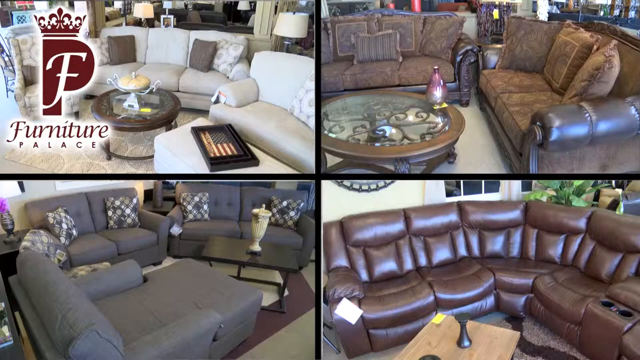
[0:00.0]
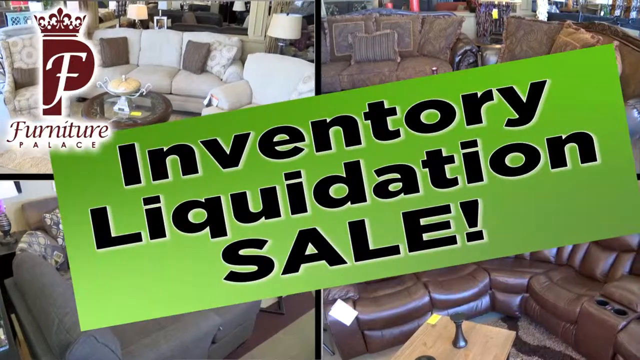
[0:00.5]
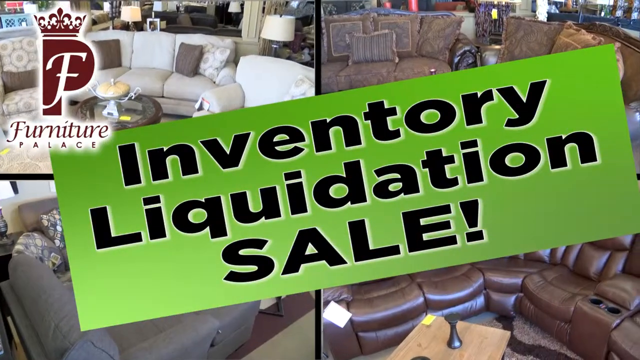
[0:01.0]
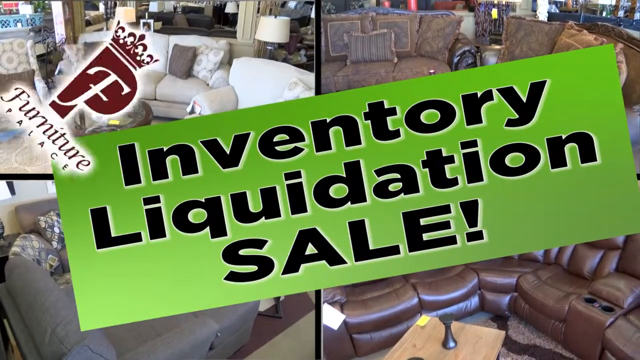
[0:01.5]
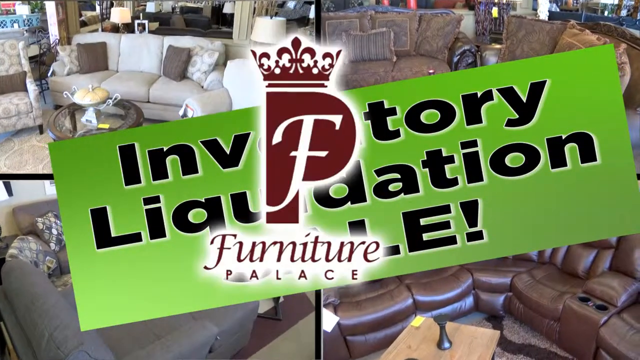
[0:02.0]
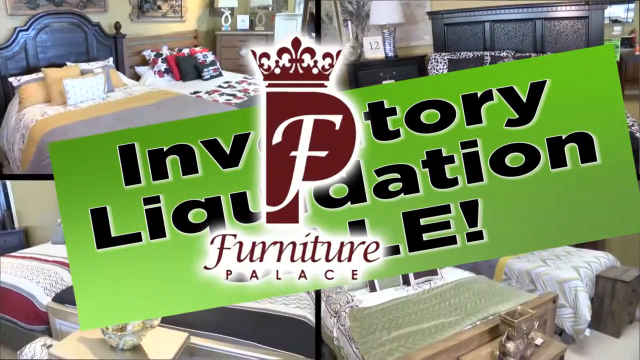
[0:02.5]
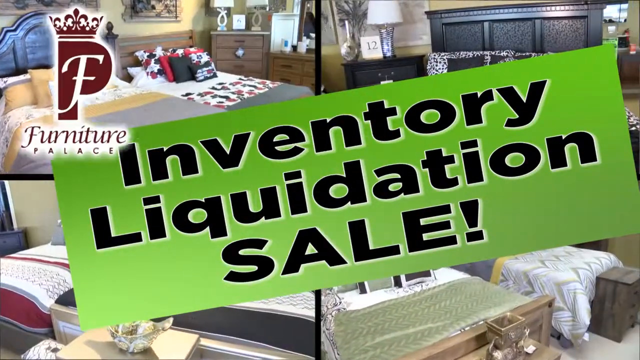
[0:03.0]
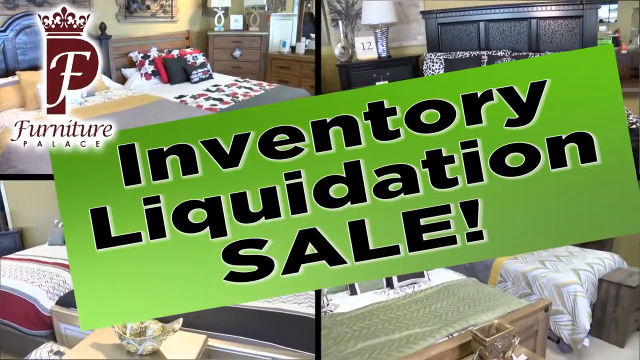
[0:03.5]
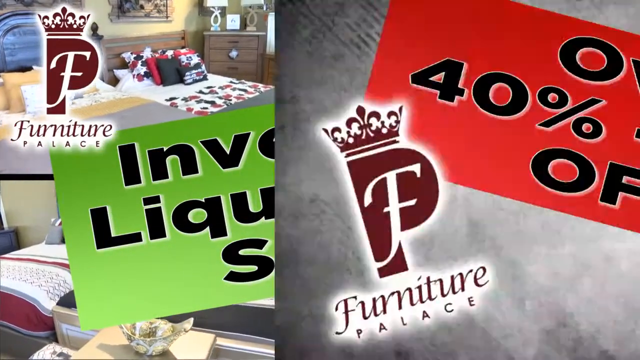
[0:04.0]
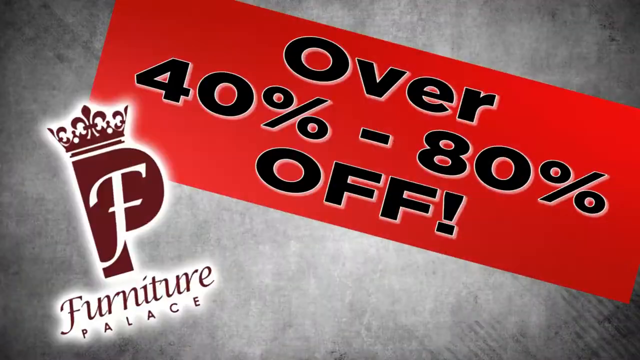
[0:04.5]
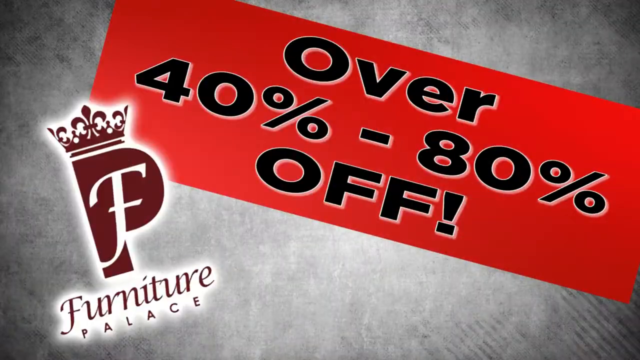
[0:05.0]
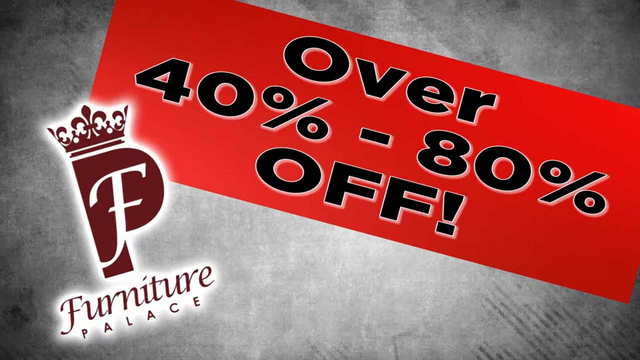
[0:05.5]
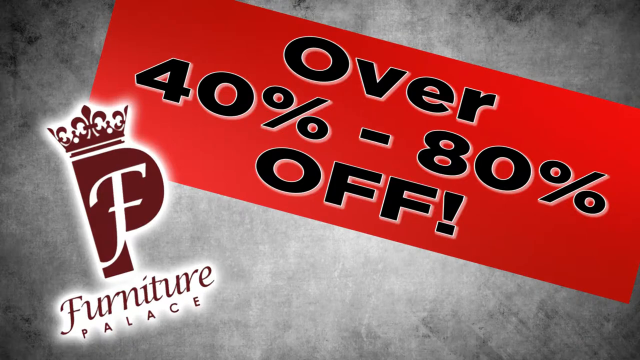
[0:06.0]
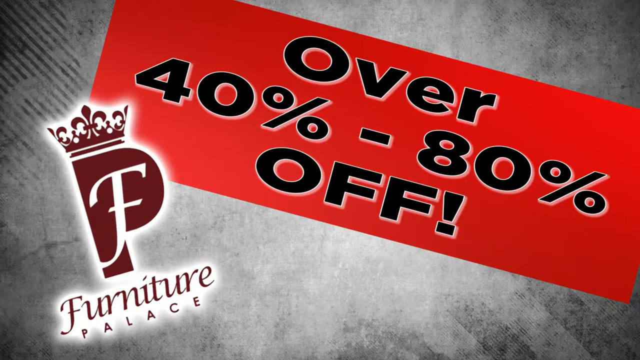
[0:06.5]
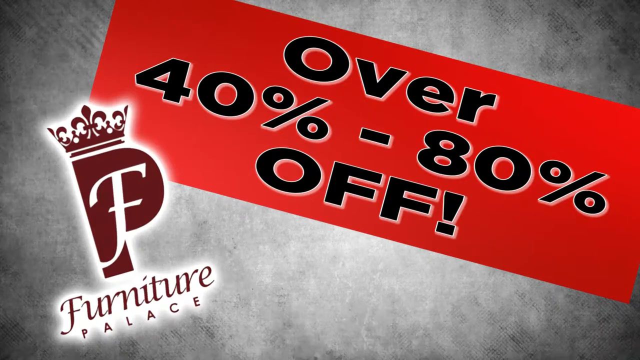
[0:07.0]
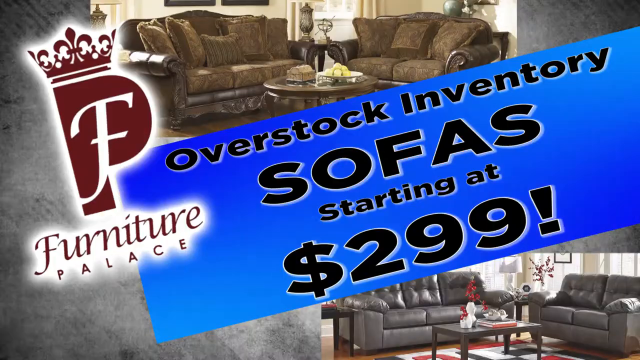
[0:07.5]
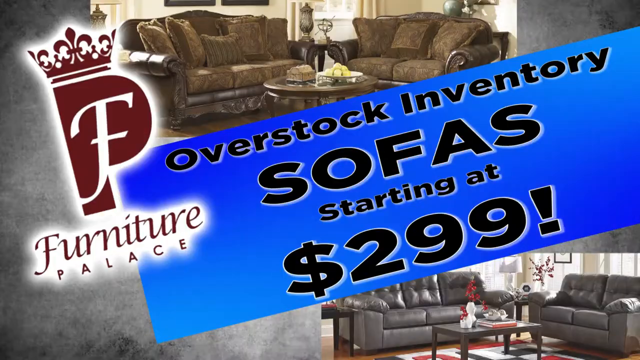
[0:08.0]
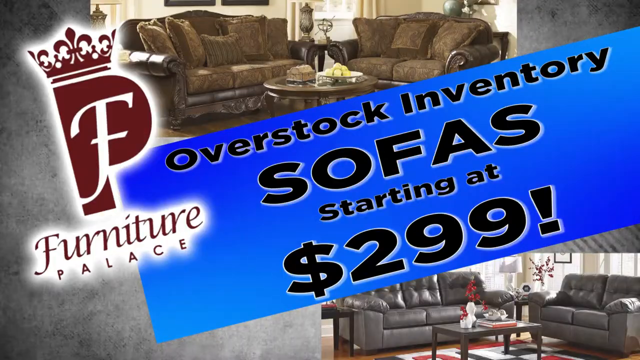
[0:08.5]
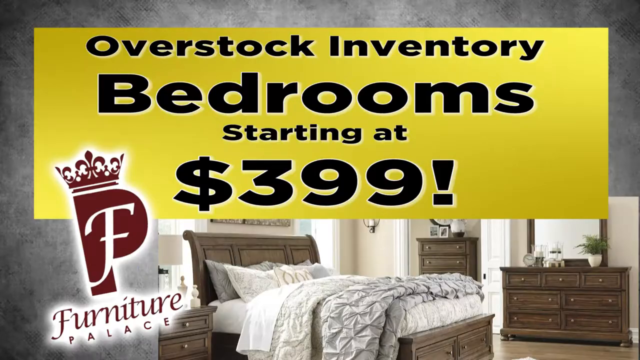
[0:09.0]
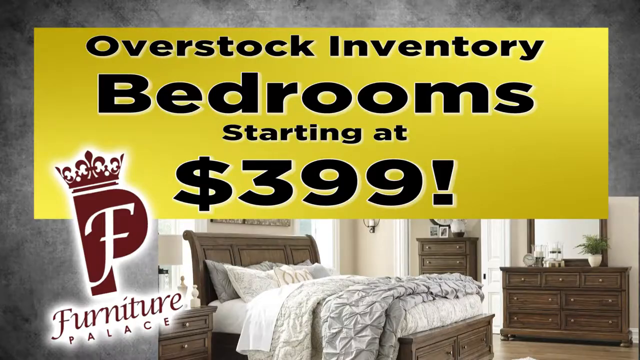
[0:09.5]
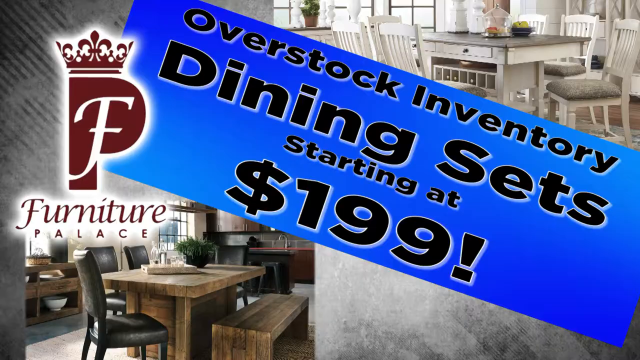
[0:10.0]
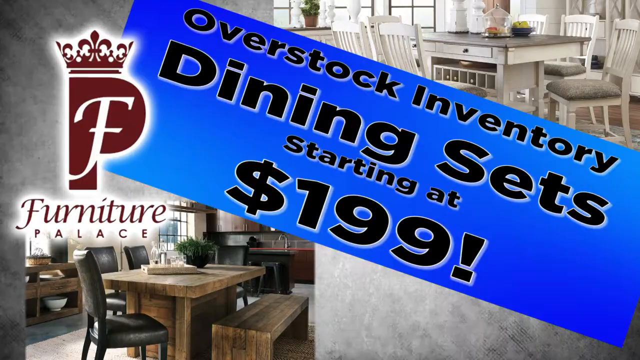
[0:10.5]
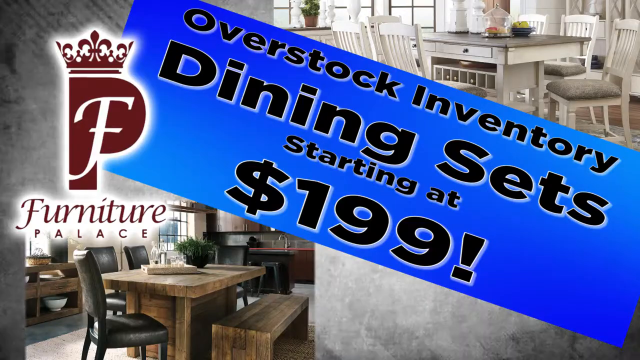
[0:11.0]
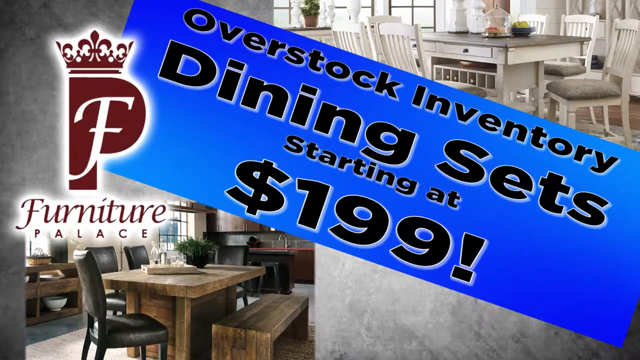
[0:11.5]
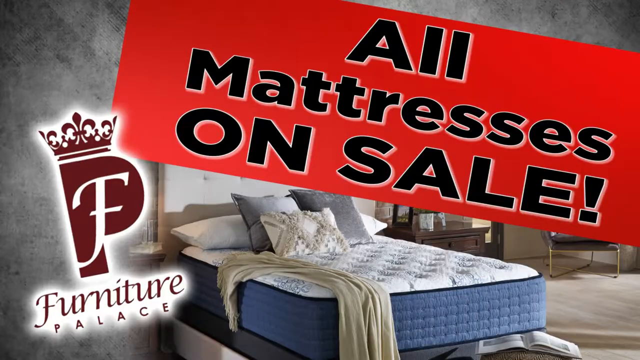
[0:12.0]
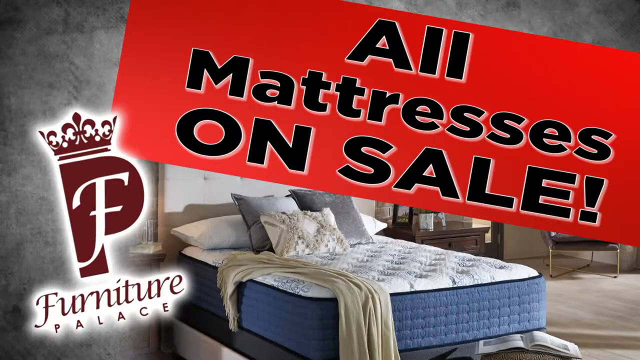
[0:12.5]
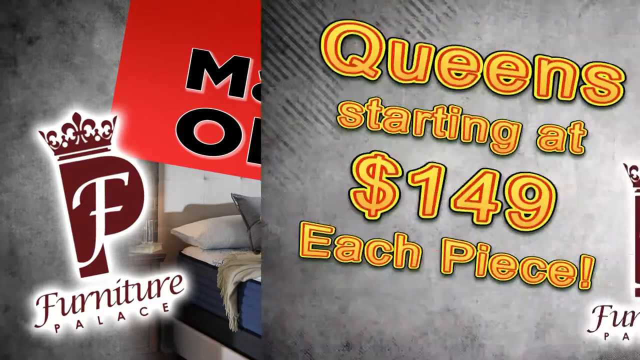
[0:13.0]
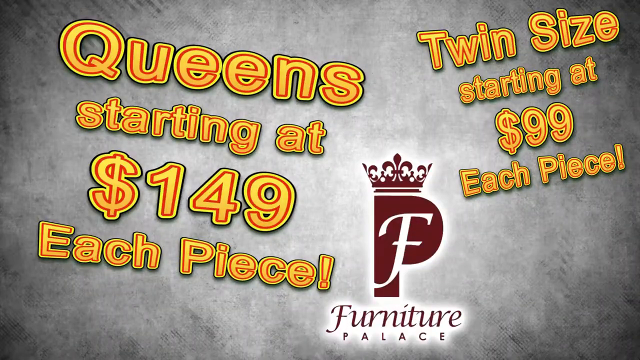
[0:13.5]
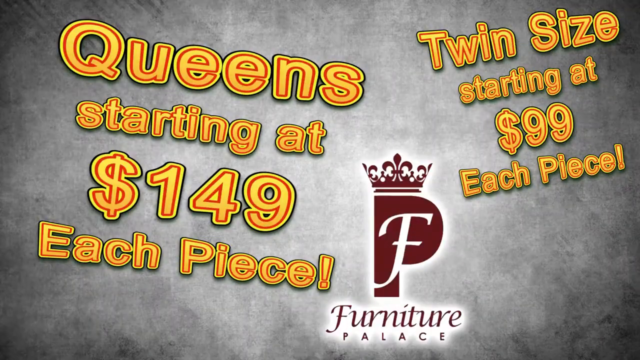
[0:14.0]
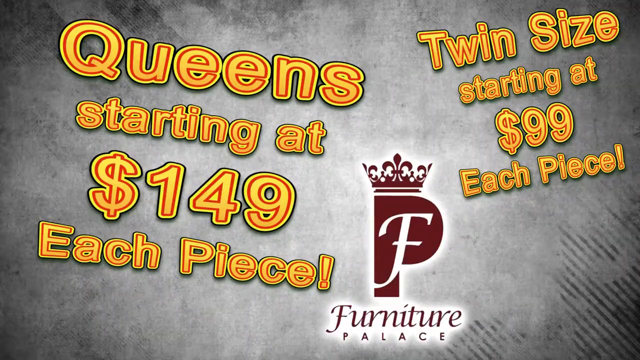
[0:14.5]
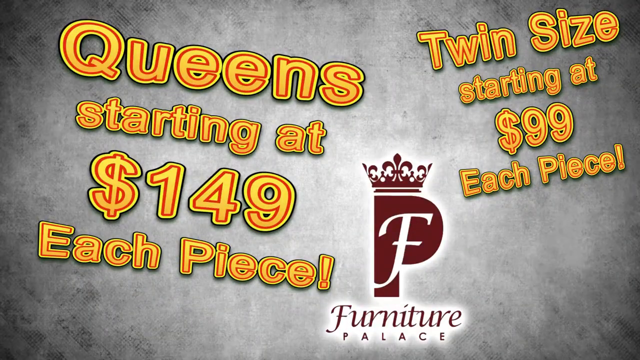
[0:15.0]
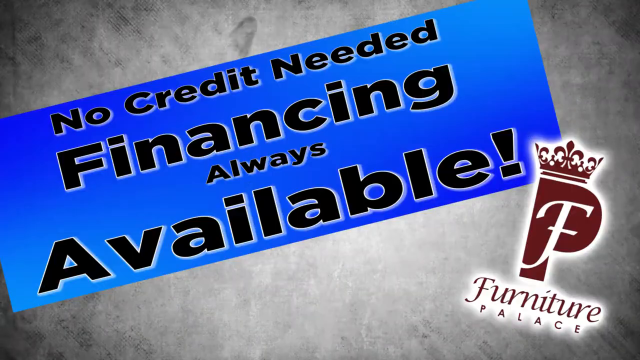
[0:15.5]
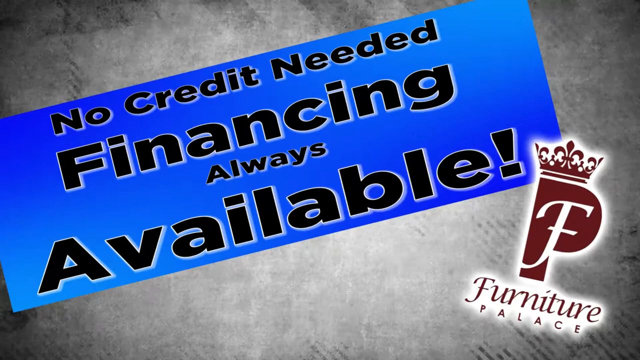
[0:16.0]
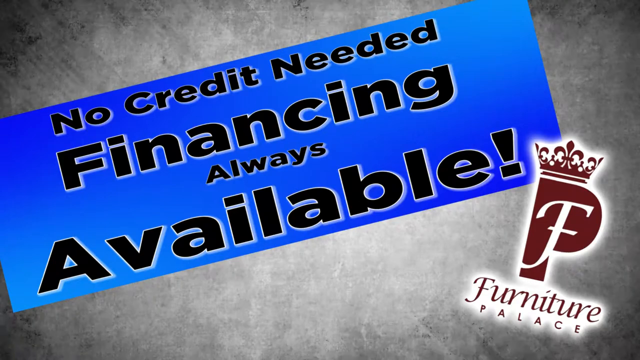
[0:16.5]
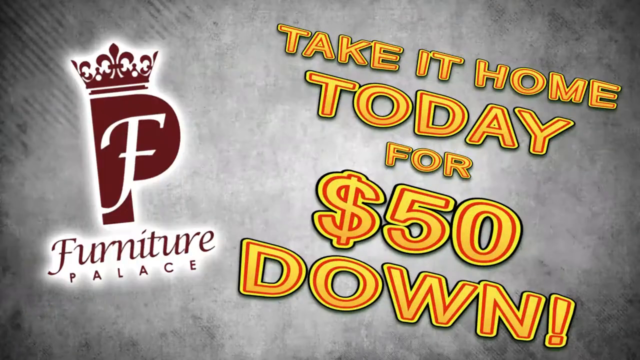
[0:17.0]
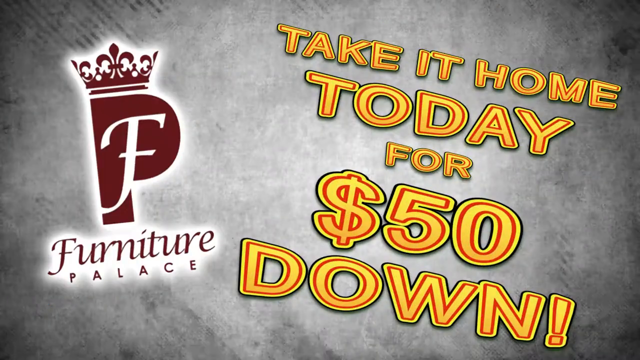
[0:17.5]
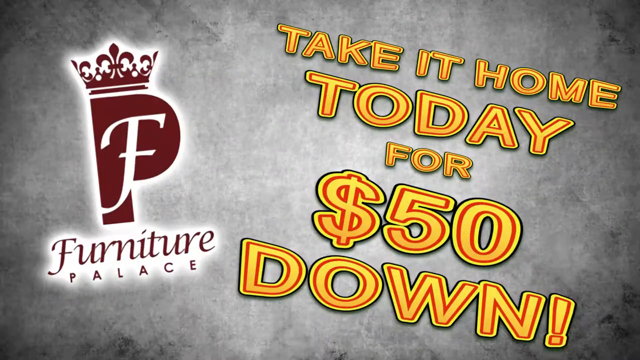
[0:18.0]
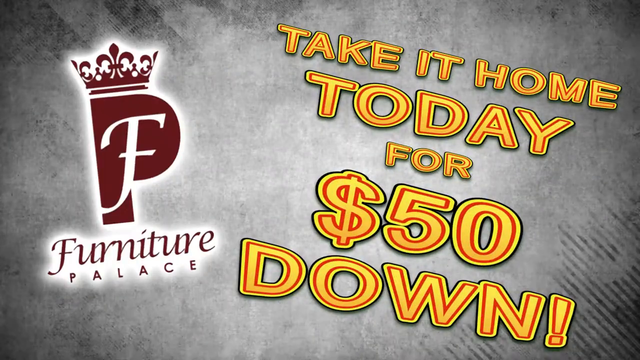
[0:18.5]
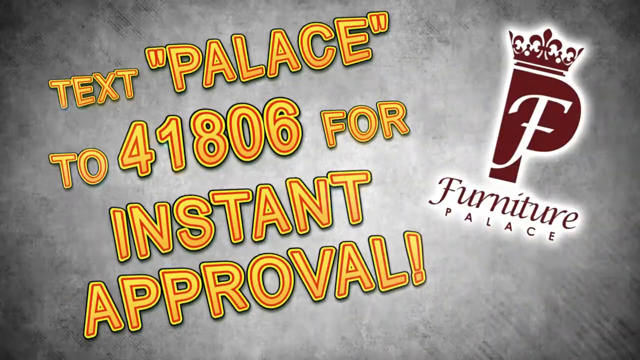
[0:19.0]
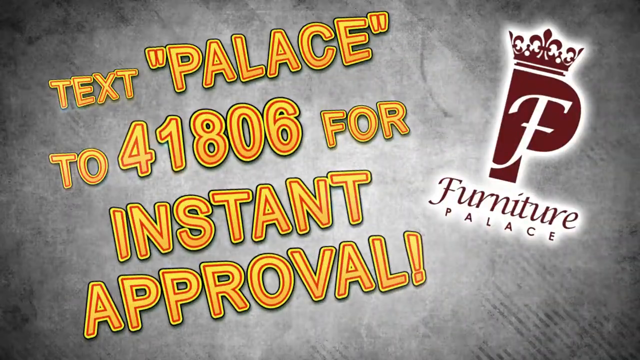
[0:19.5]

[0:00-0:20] This promotional video is for a furniture sales room called Furniture Palace. It opens with the screen cut into four equal rectangles. The top right holds a Furniture Palace logo: a blocked-out P with a stylised F in the middle and a crown on top, in a burgundy colour, with "Furniture Palace" written underneath. The image shows four large sofa sets: the top right is grey, the top left looks like a leather brown sofa, with two sofas, the bottom left is dark grey, and the bottom right is a full leather, rounded, large sofa. "Inventory liquidation sale" flashes up in black writing on a green background. The Furniture Palace logo spins to the middle of the screen. The next scene cuts to "over 40% to 80% off" in black writing on a red background, with "Furniture Palace" in the bottom right. It cuts to another scene reading "overstock inventory, sofas starting at £2.99", then "overstock inventory bedroom starting at £3.99", then "overstock inventory dining sets starting at $1.99", and the video continues in this way.